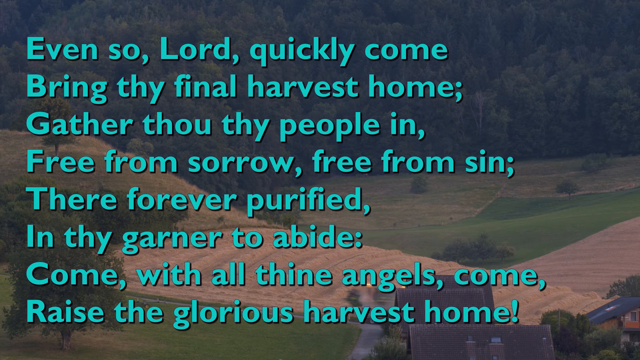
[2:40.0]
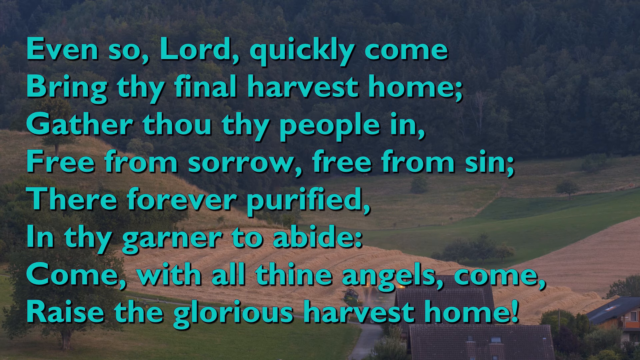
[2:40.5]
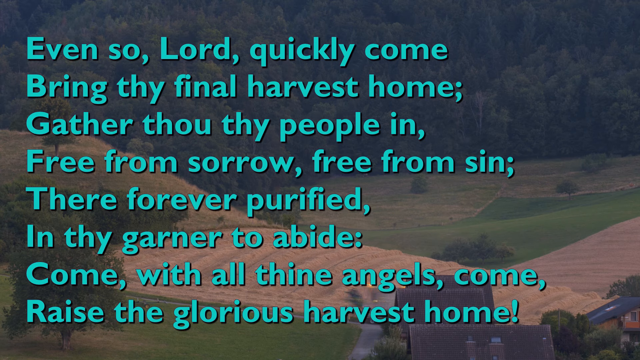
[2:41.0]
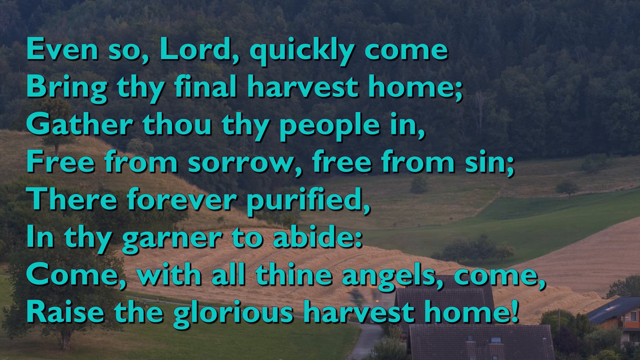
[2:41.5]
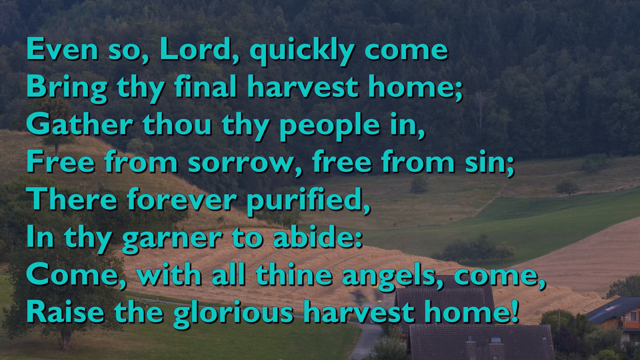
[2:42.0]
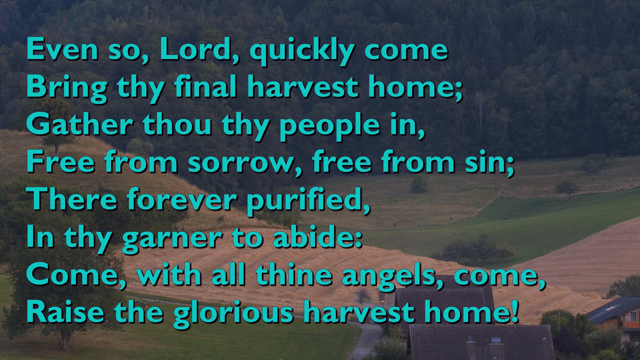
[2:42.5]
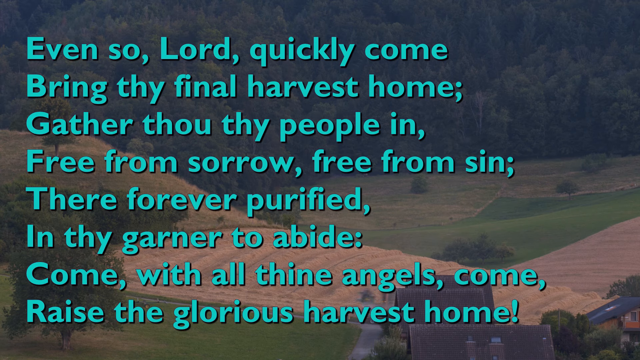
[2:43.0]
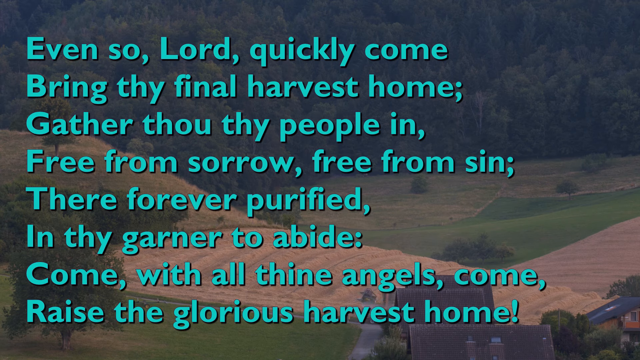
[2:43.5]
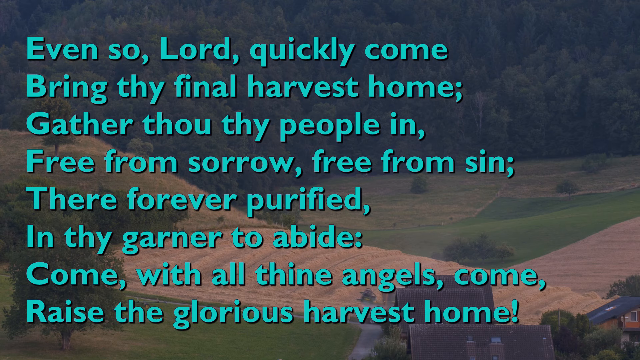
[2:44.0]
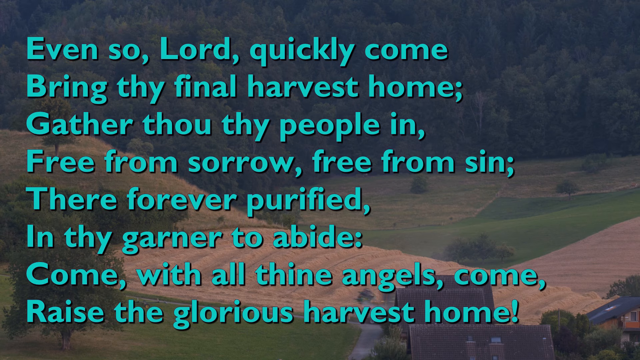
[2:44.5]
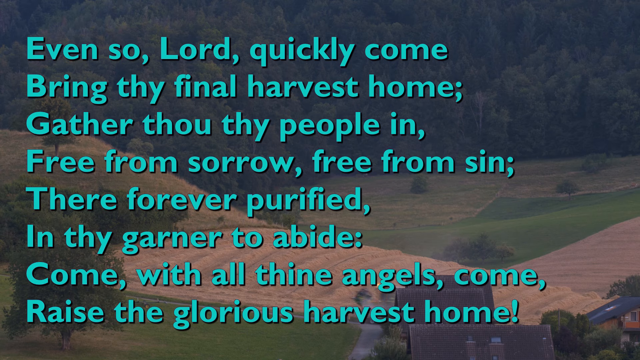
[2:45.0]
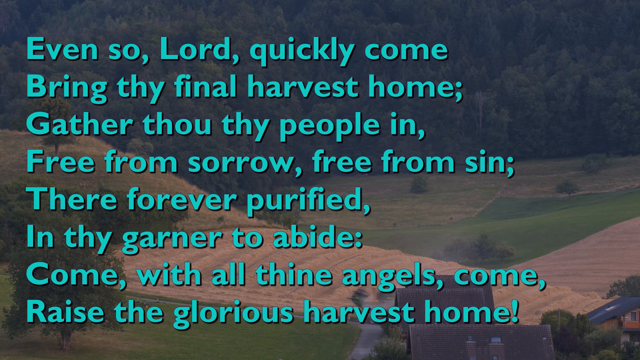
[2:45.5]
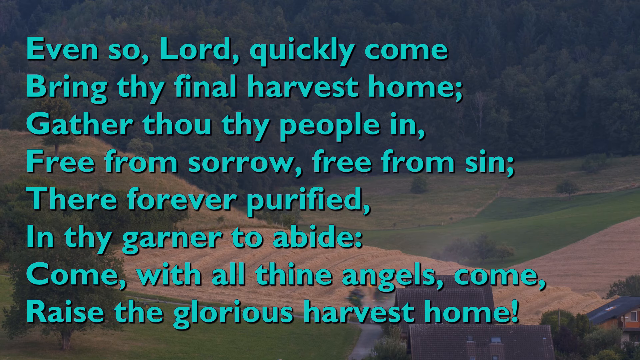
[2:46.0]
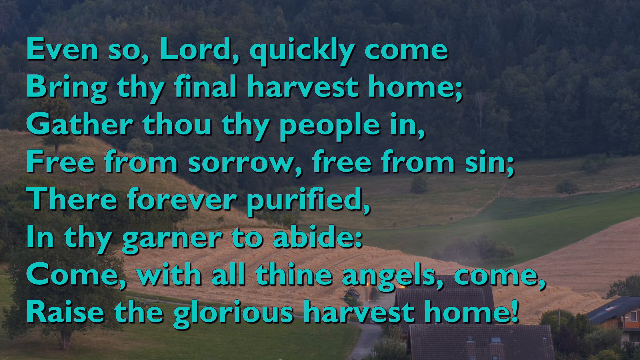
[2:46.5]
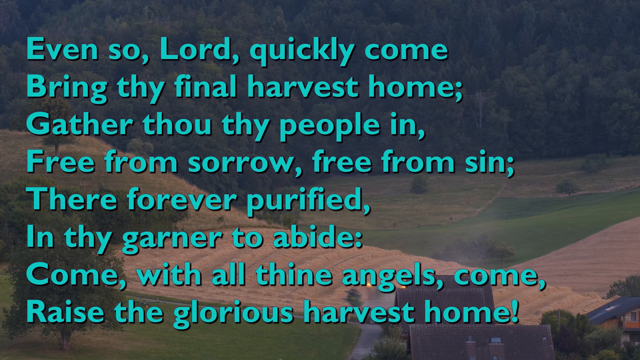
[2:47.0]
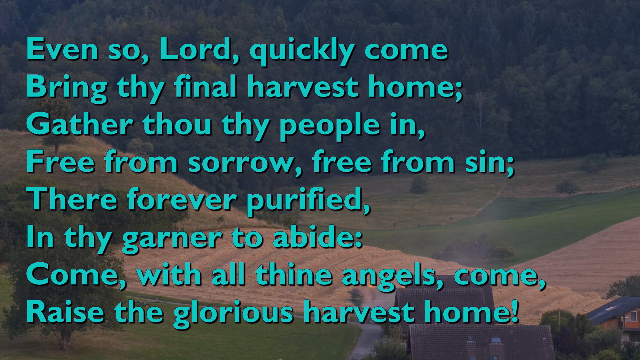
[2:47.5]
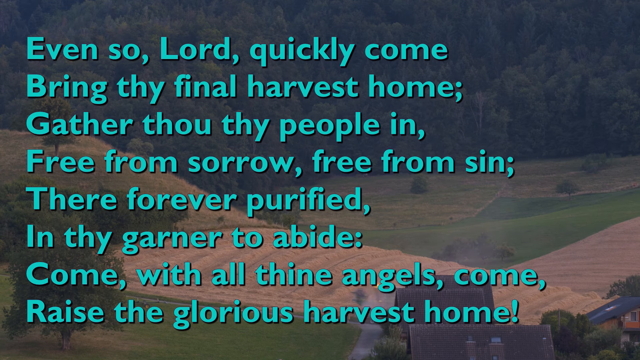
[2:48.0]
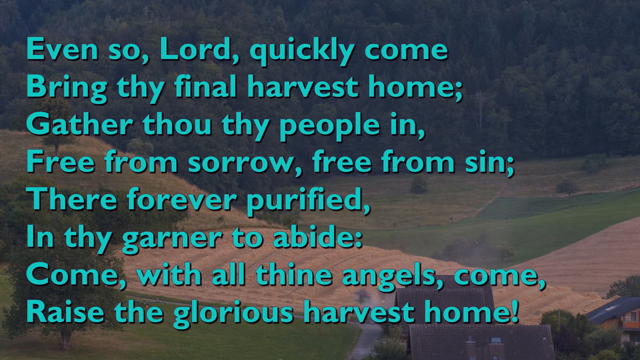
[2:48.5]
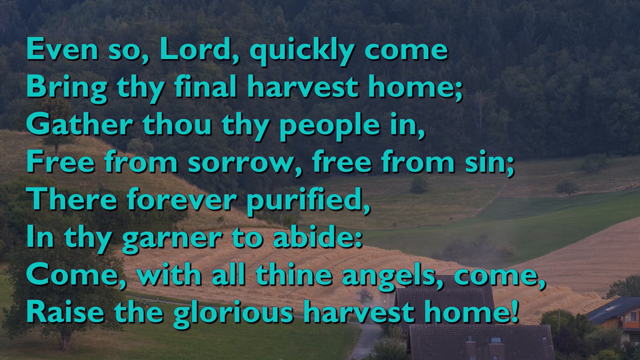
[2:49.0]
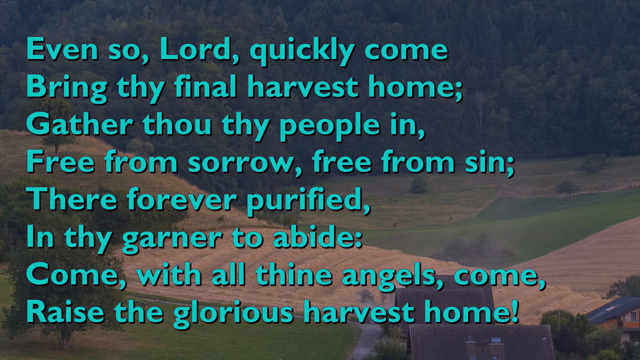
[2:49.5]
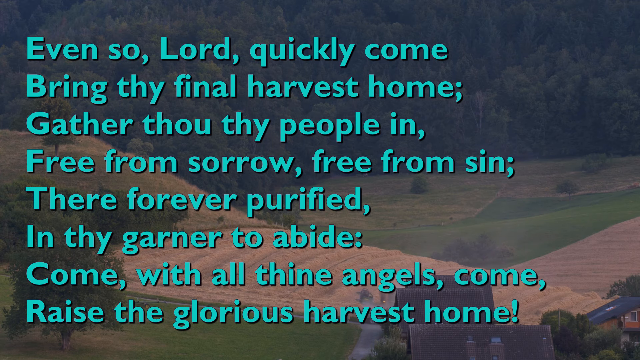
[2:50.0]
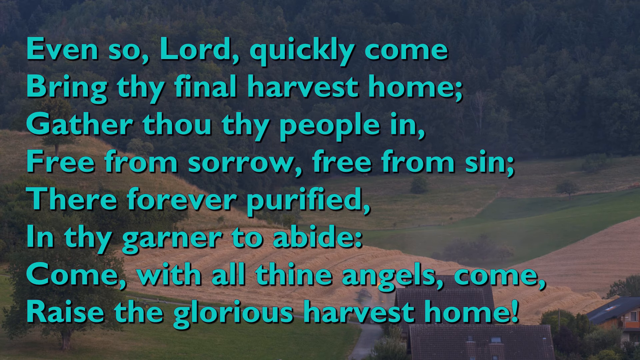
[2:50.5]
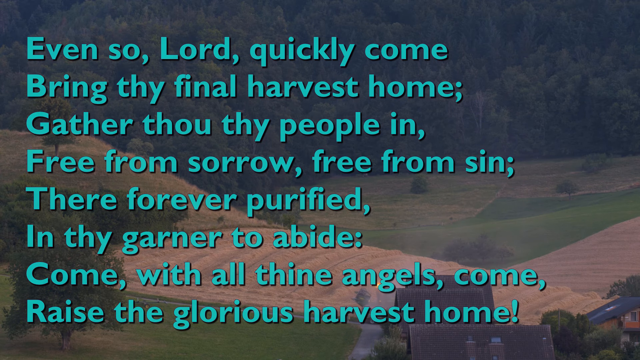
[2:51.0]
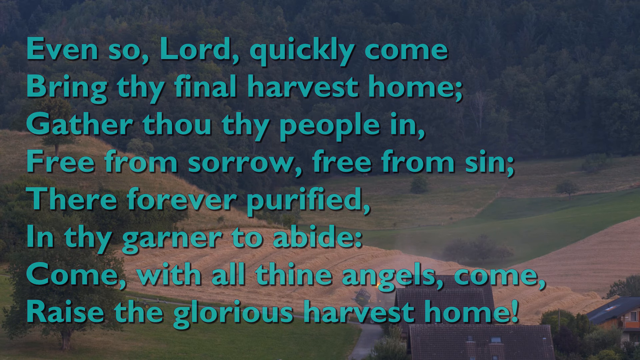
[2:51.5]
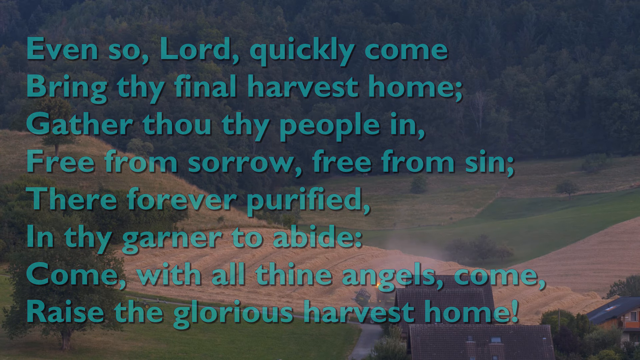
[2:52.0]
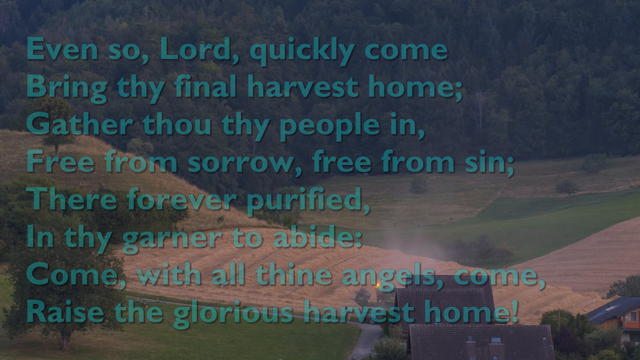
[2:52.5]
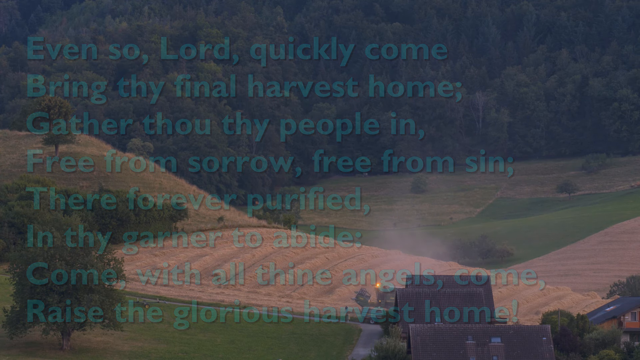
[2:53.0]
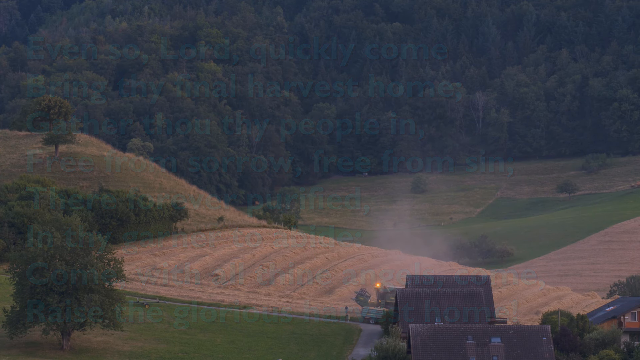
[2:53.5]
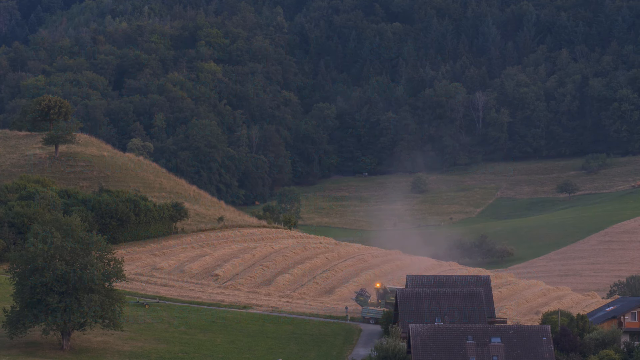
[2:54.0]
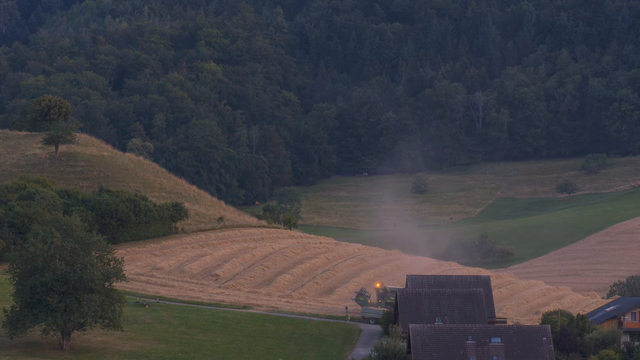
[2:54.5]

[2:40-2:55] In the right-hand corner are the roofs of two small houses. In front of them is a strip of light brown wheat, with a small truck cutting layers of wheat. Past that is a dark green area of grass, and past that another area of grass that is light green and tan and looks dead. Dark green, tall evergreen trees fill up the whole background. A grassy hill has one single tree on top of it. Running across the screen in turquoise green, the text reads: "Even so, Lord, quickly come, bring thy final harvest home. Gather thou thy people in, free from sorrow, free from sin." It continues: "Come with all thine angels, come, raise the glorious harvest home."